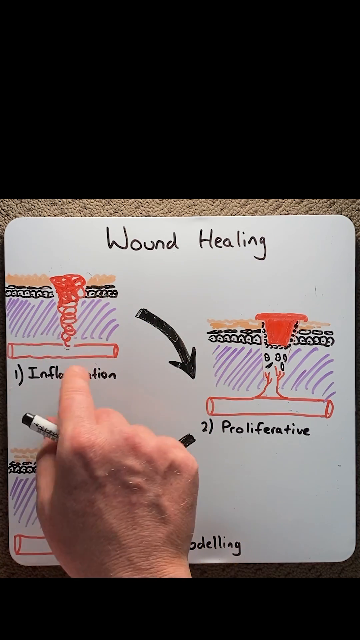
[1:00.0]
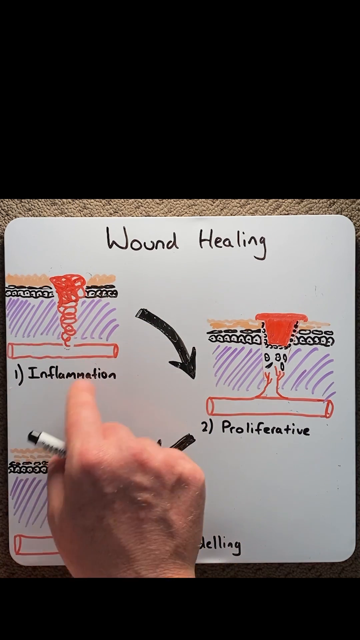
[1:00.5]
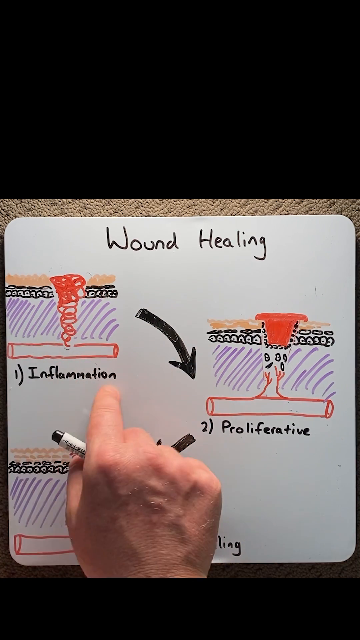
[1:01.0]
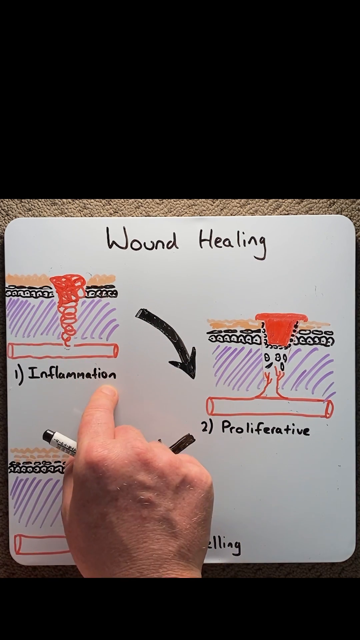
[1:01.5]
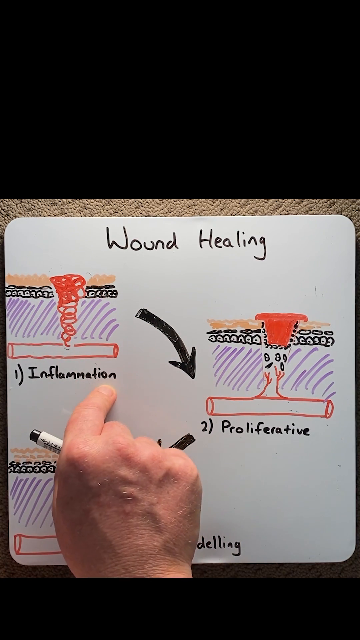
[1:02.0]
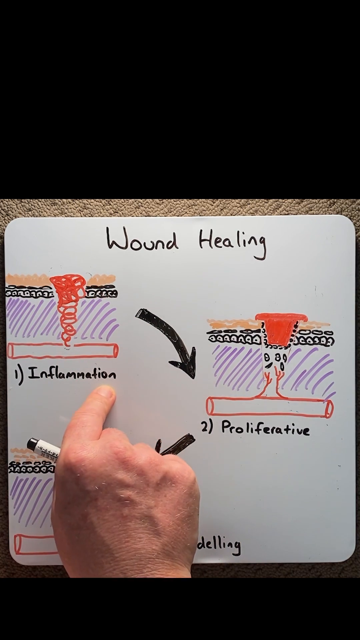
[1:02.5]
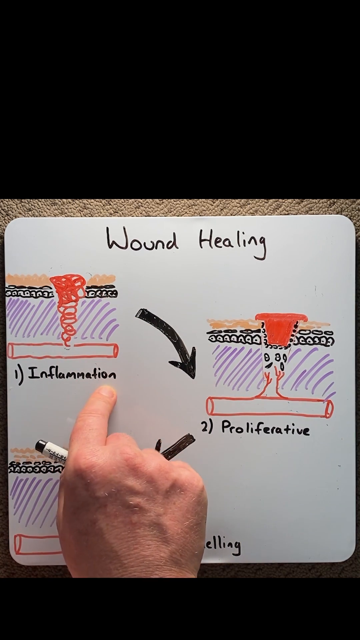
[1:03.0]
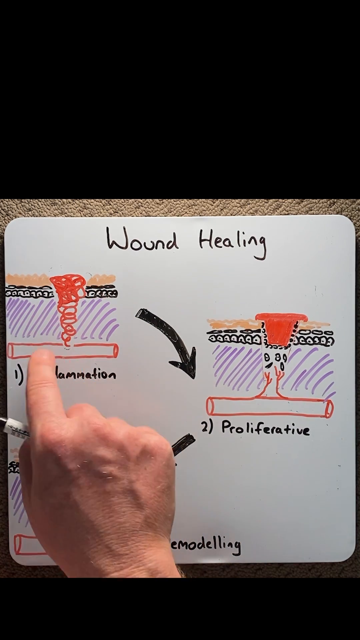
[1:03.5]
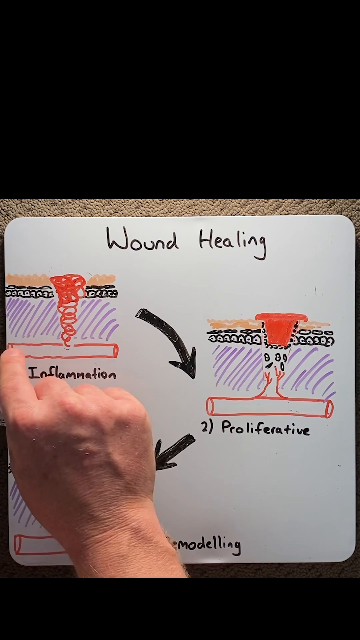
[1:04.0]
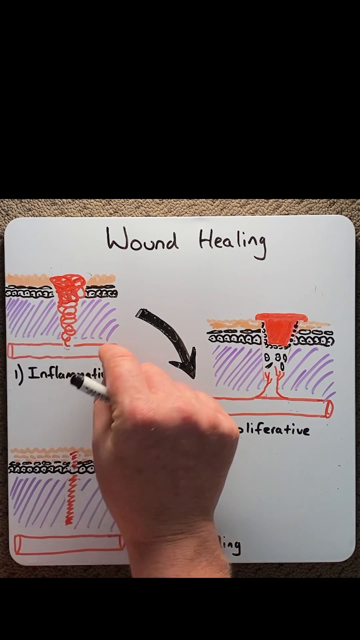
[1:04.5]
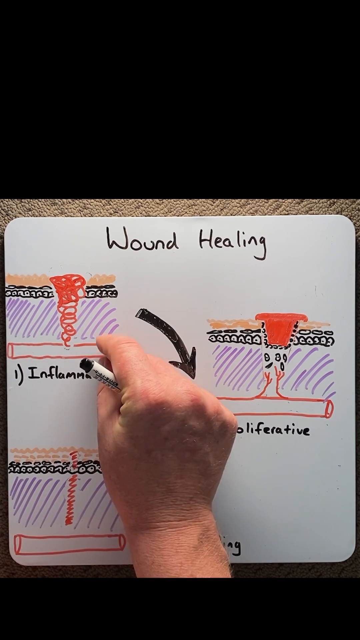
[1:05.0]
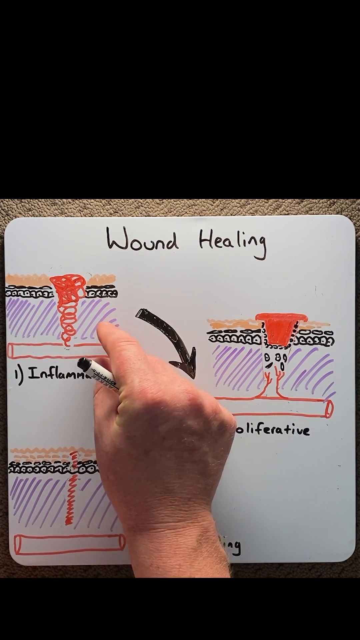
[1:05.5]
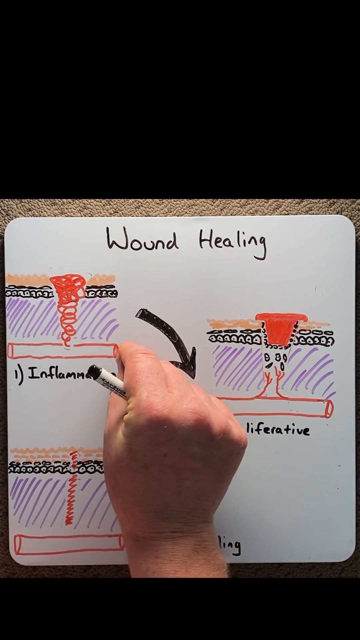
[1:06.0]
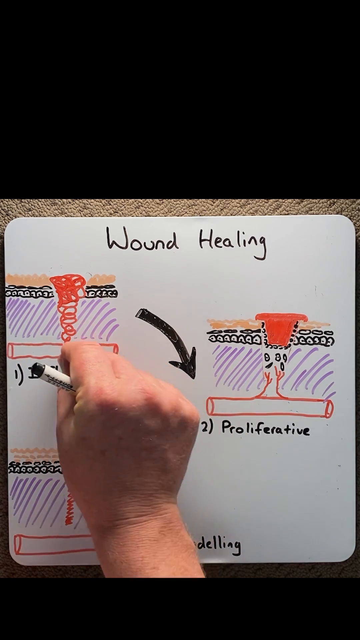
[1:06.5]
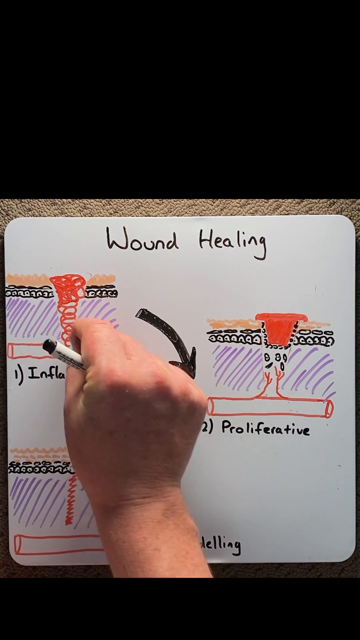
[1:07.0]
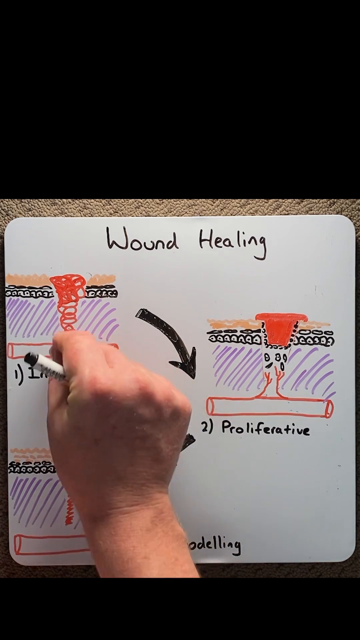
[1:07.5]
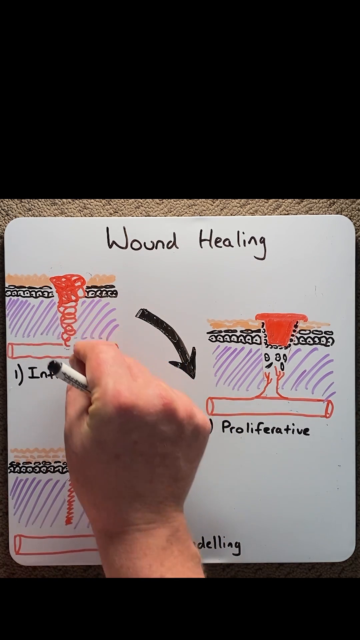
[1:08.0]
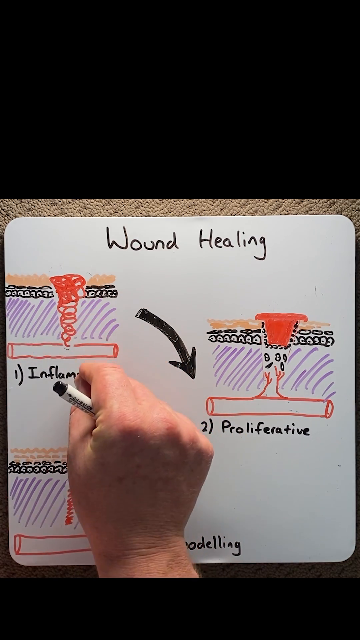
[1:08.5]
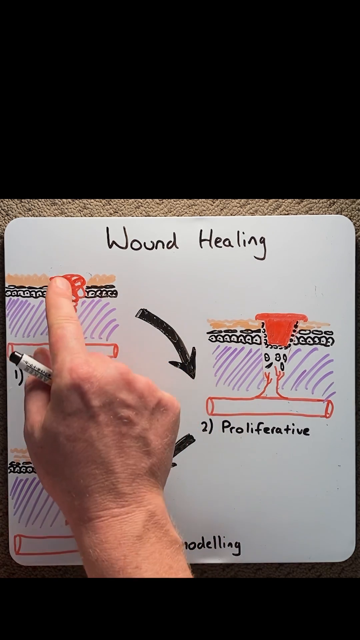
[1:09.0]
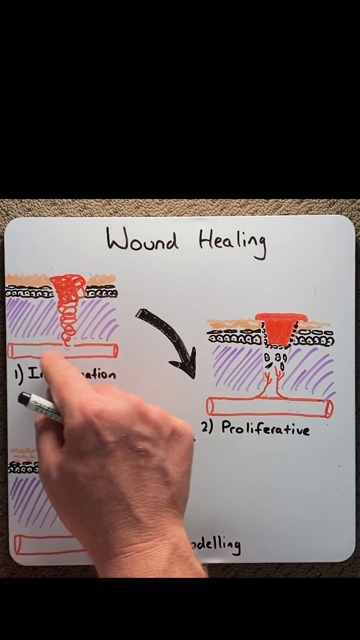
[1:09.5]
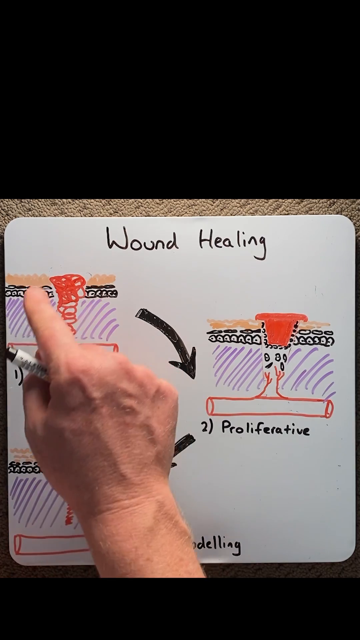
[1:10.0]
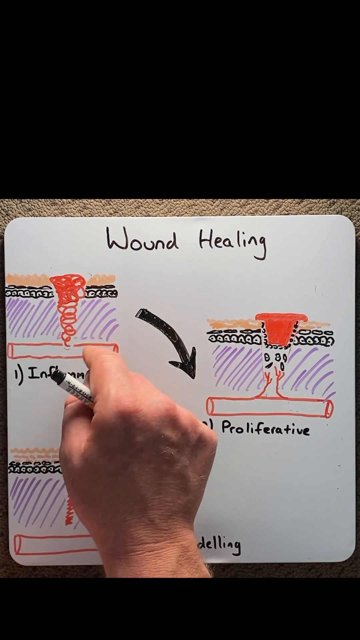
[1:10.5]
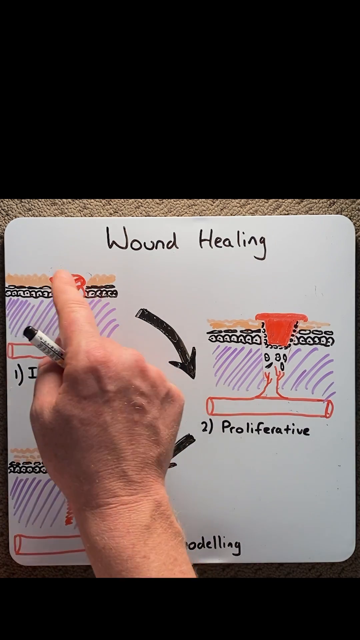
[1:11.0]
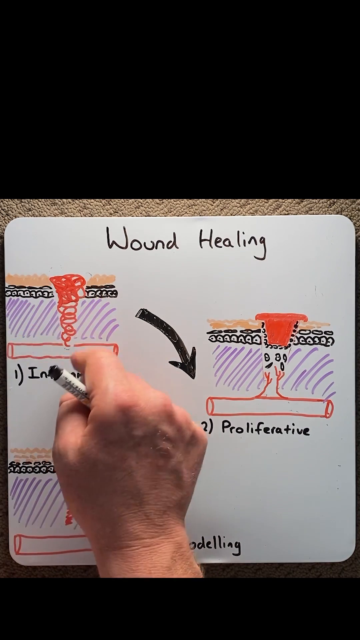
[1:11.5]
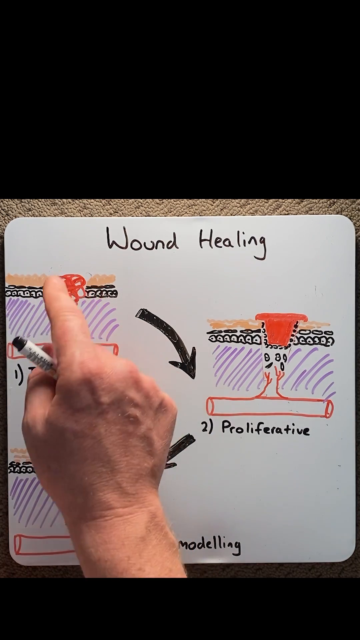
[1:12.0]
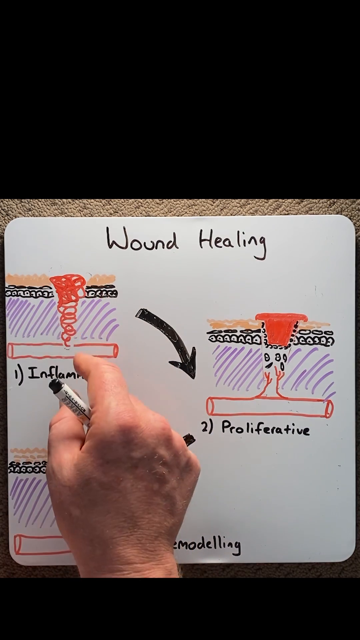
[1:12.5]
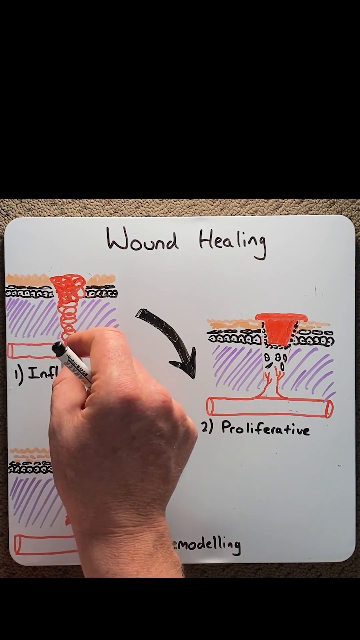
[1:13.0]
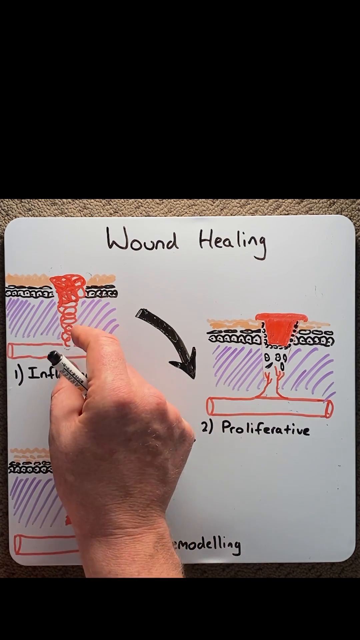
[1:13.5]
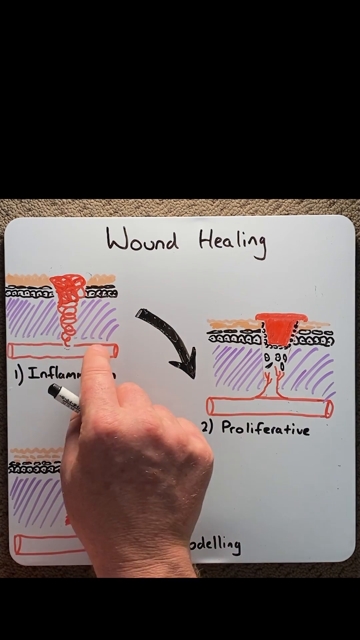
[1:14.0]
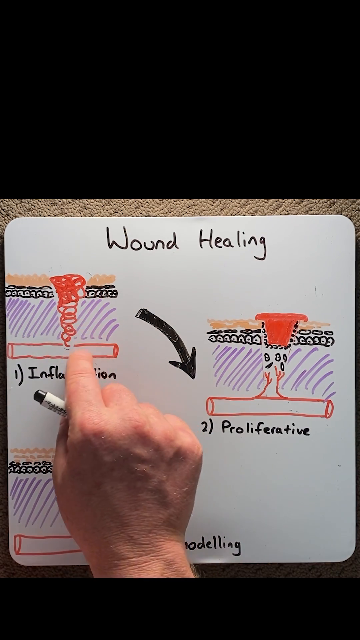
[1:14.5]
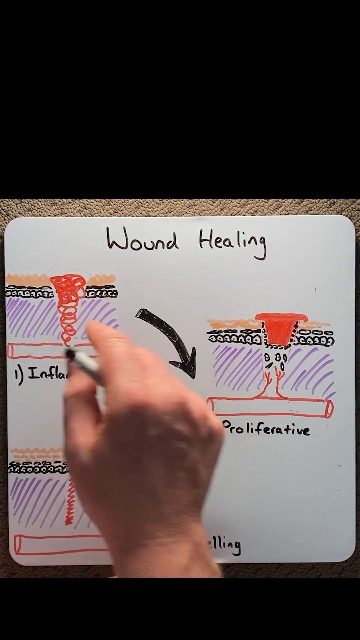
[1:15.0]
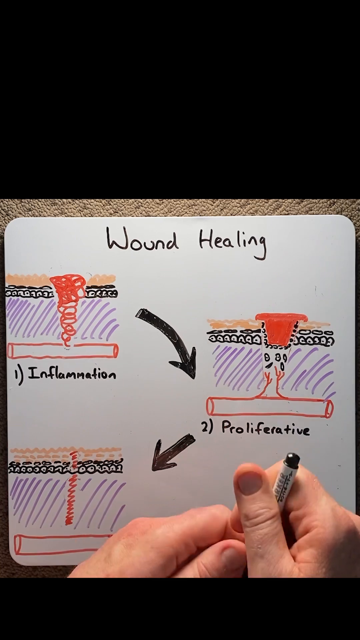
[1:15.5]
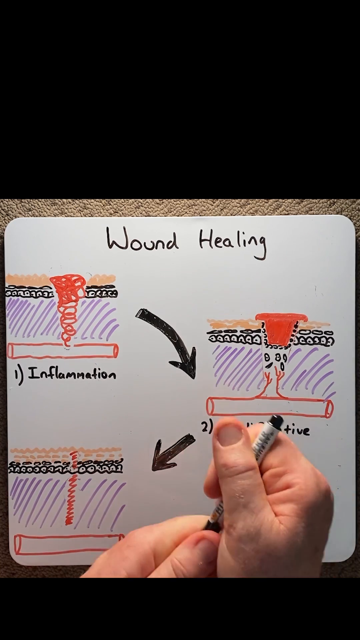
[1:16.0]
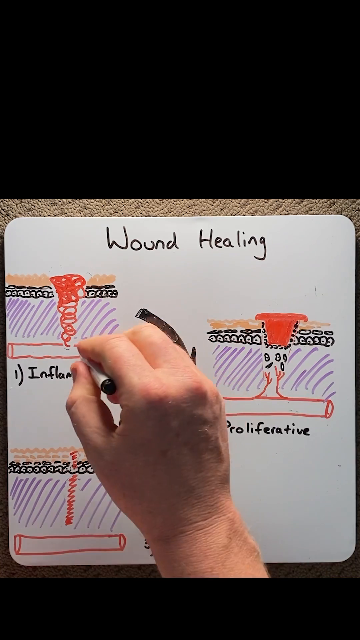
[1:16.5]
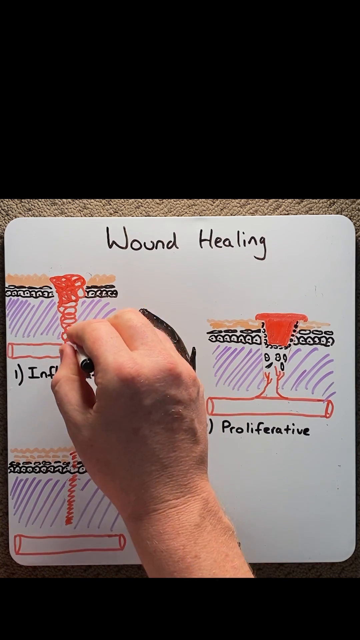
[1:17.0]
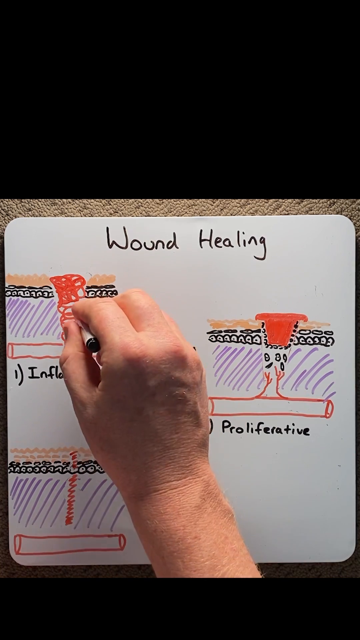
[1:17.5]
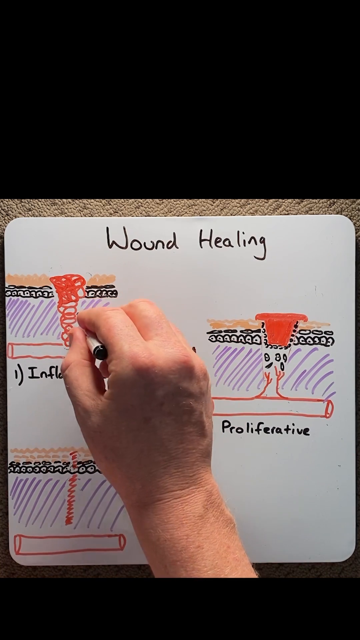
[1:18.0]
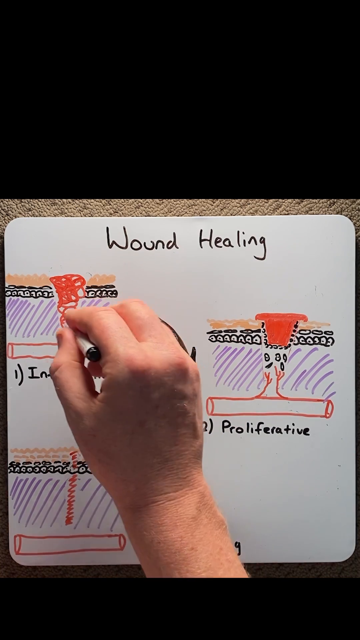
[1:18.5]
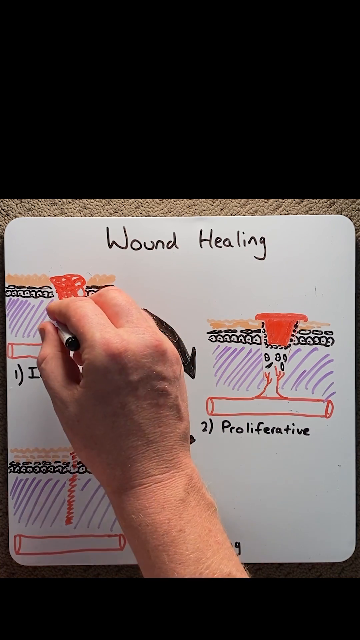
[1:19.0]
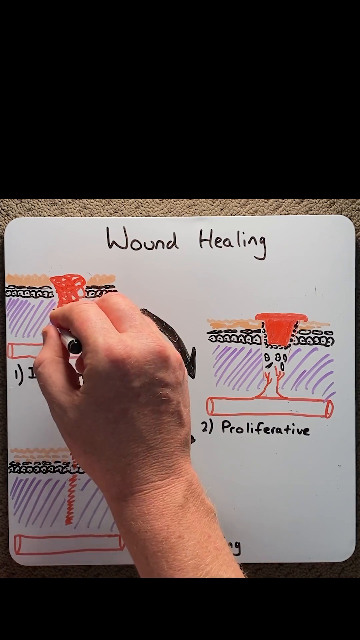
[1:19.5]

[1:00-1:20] The wound healing illustration is done in markers on a dry erase whiteboard, with three steps: inflammation, proliferative and remodeling. The man is detailing the first step, inflammation; the illustration shows the wound inflamed and blood rising up out of it. He points and gestures to this, and makes a little drawing on each side of a black mark whose meaning is unclear. At the top of the board it says "wound healing." The board is fairly small, not a classroom board; it is laying on the floor, with carpet visible behind it. The man's hands are rather big and kind of chunky, and he is apparently in his 40s.